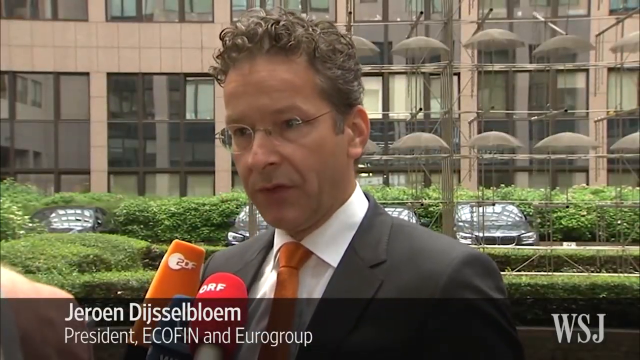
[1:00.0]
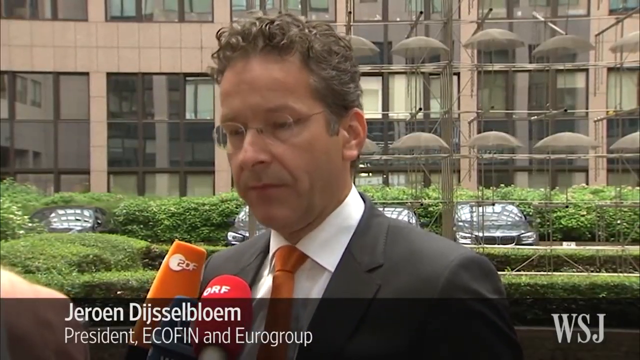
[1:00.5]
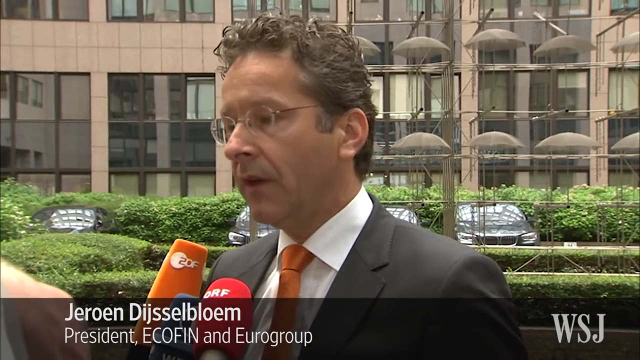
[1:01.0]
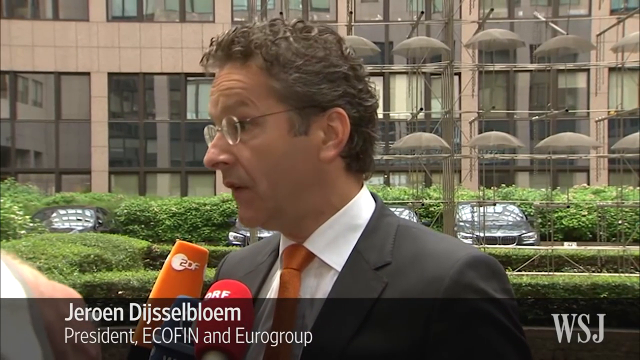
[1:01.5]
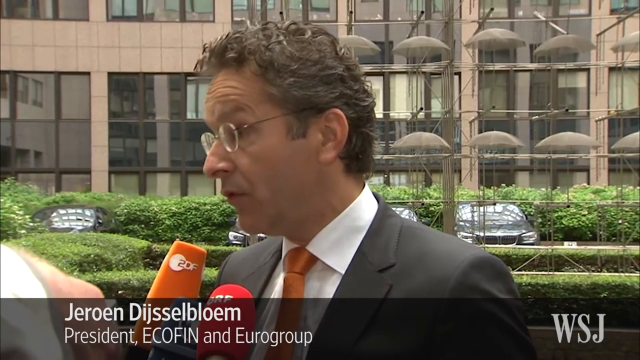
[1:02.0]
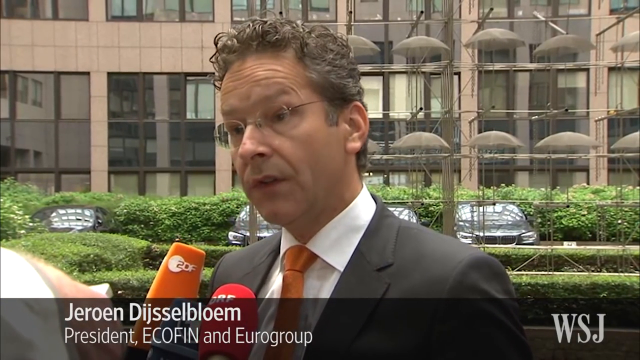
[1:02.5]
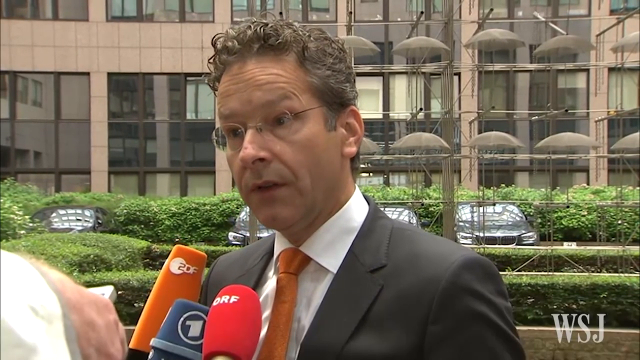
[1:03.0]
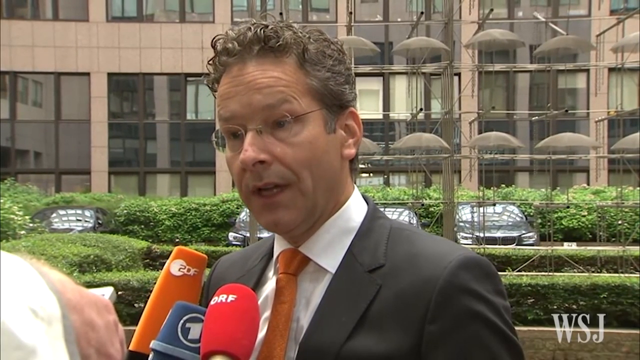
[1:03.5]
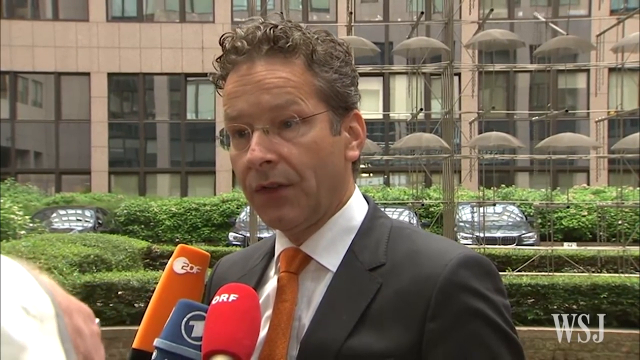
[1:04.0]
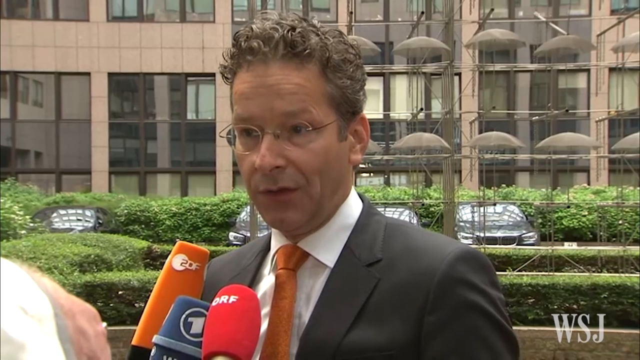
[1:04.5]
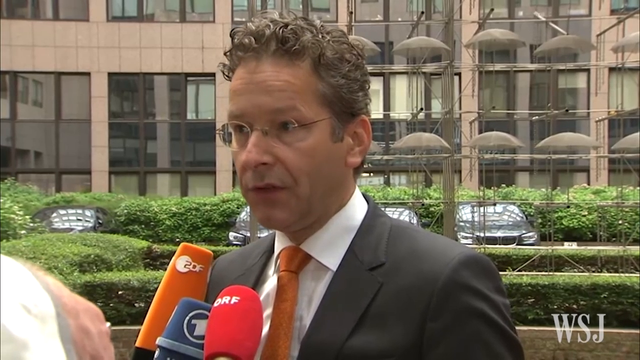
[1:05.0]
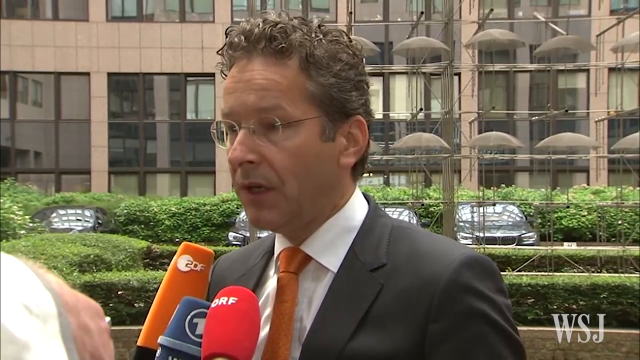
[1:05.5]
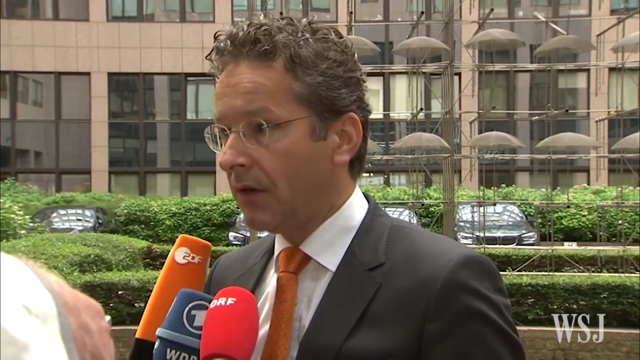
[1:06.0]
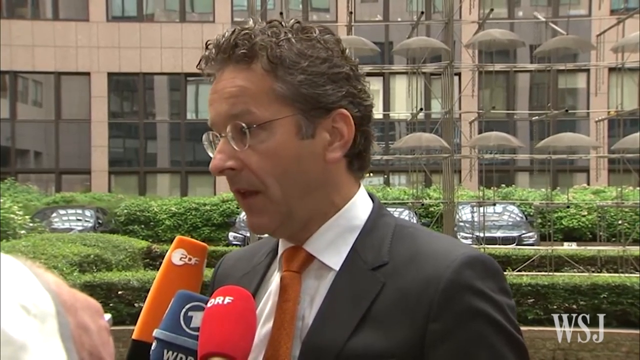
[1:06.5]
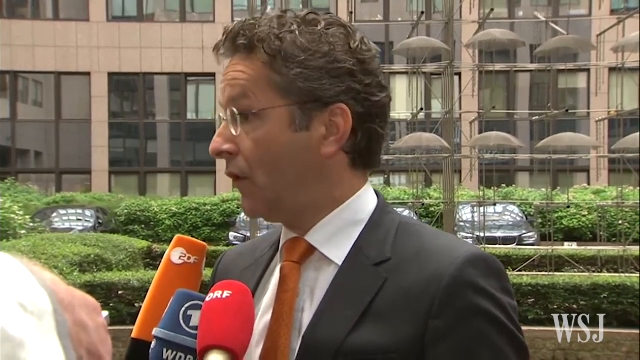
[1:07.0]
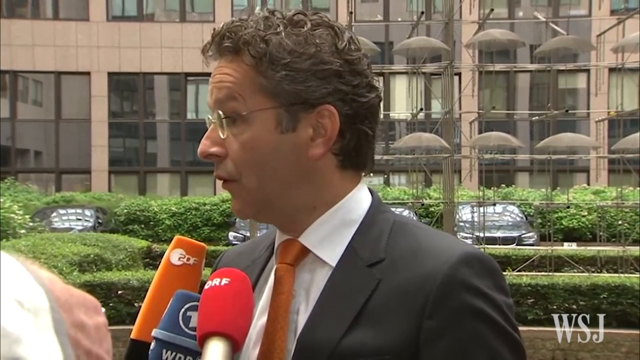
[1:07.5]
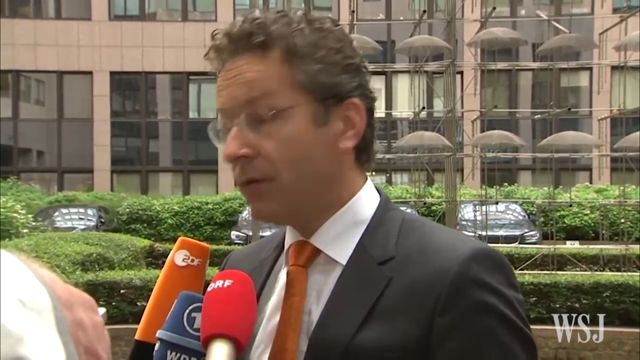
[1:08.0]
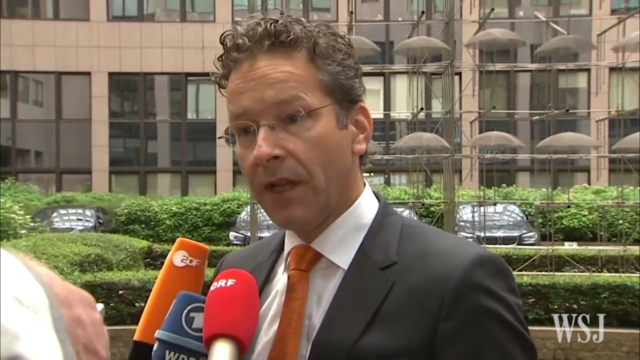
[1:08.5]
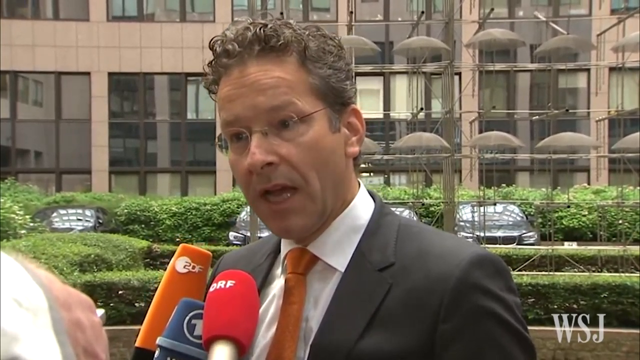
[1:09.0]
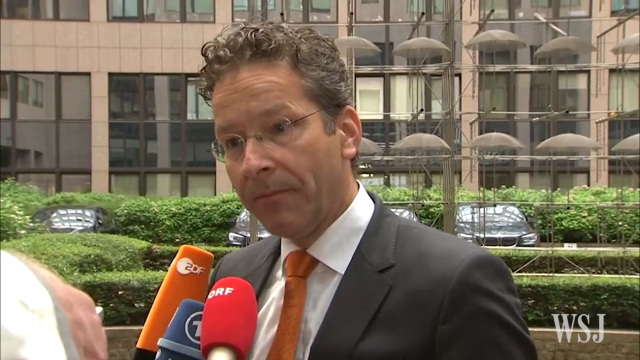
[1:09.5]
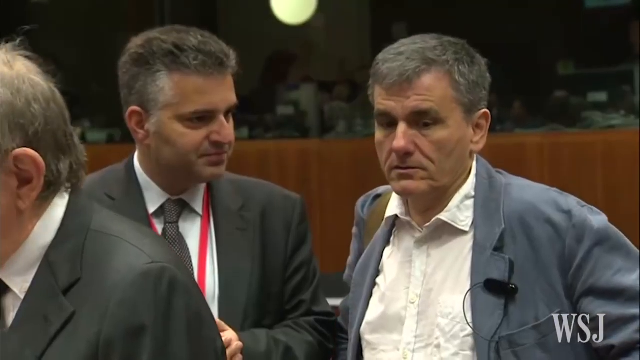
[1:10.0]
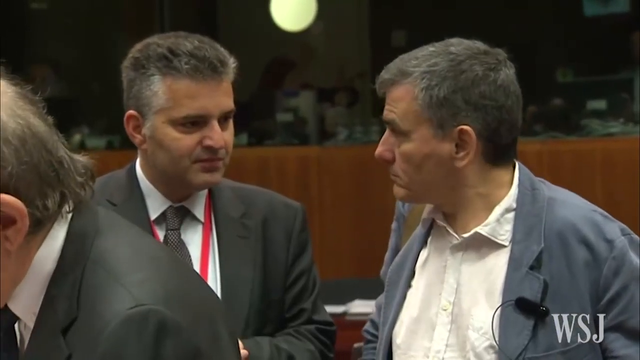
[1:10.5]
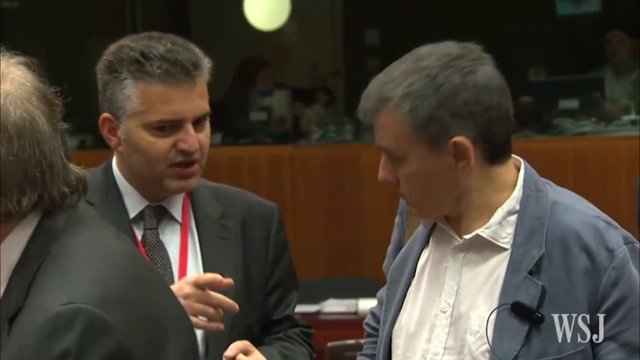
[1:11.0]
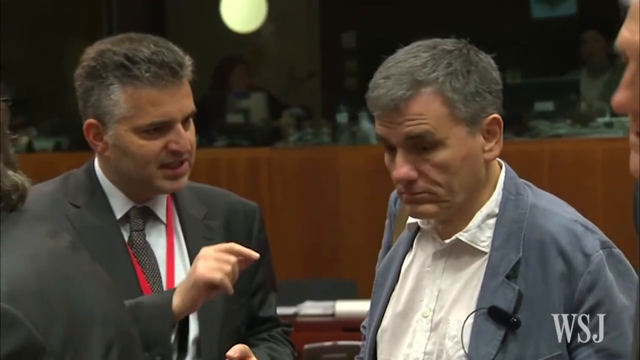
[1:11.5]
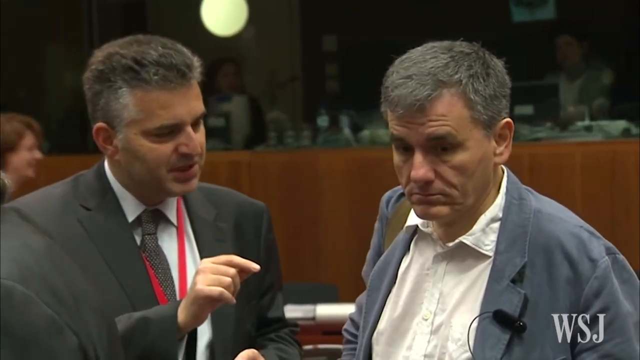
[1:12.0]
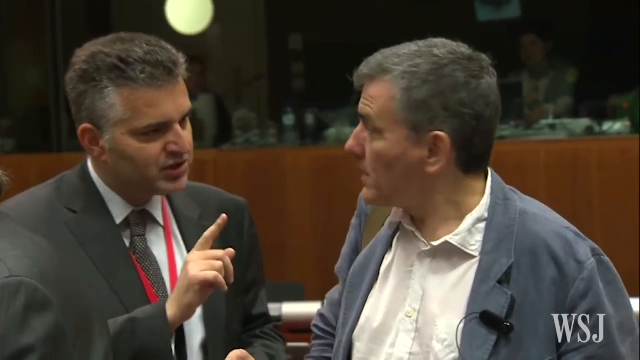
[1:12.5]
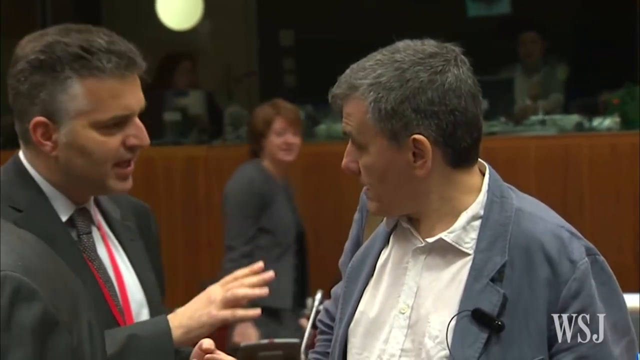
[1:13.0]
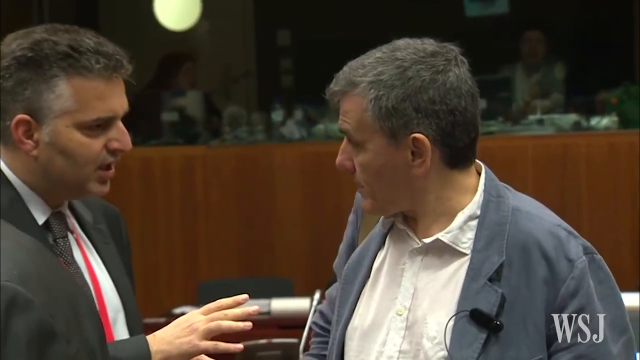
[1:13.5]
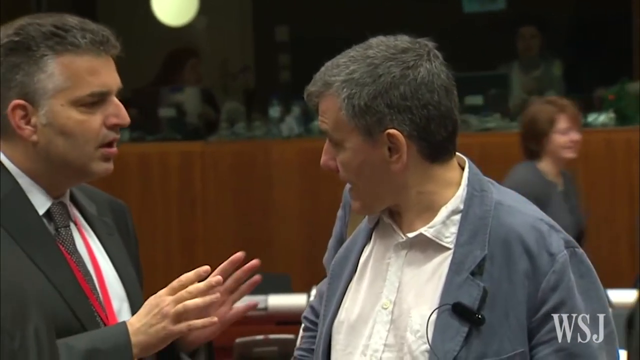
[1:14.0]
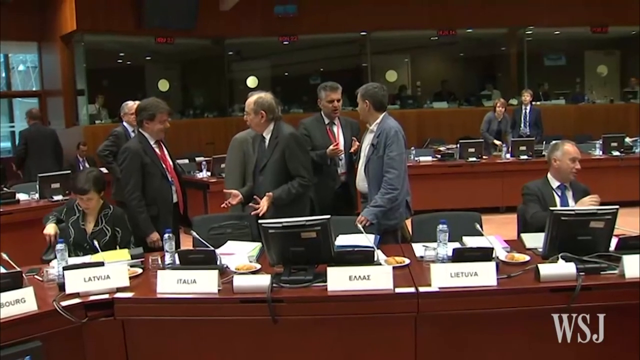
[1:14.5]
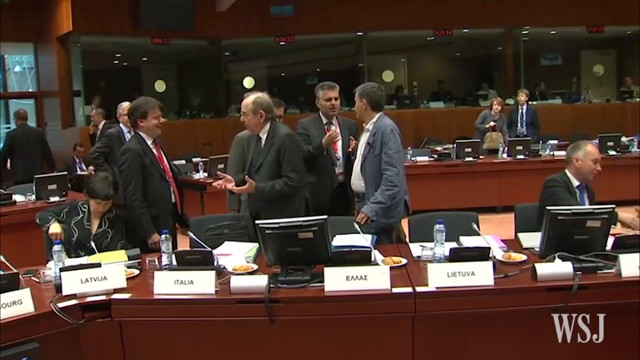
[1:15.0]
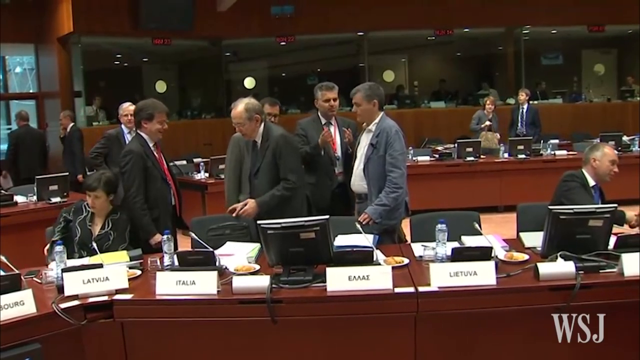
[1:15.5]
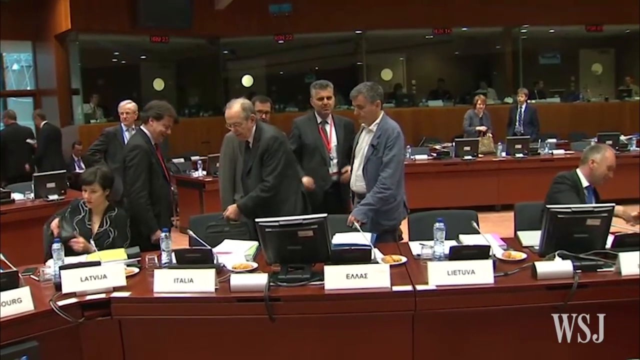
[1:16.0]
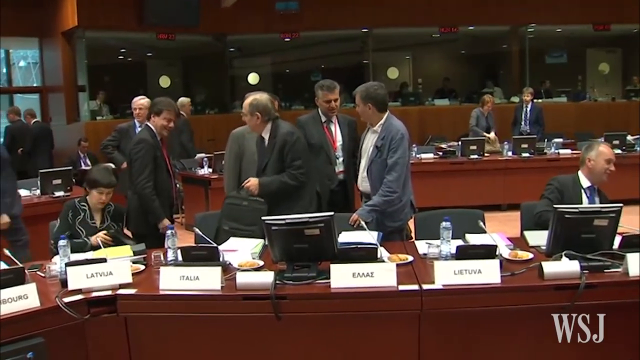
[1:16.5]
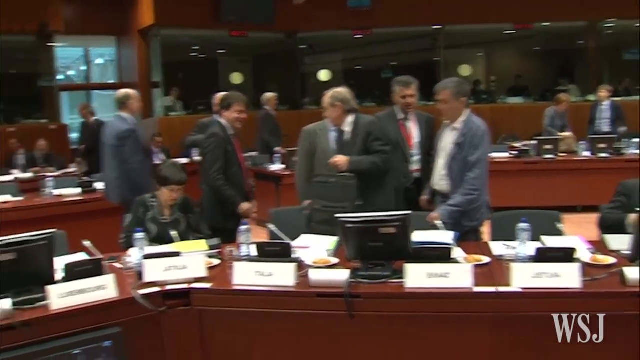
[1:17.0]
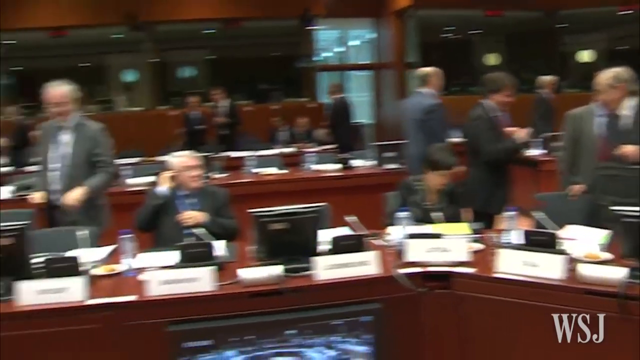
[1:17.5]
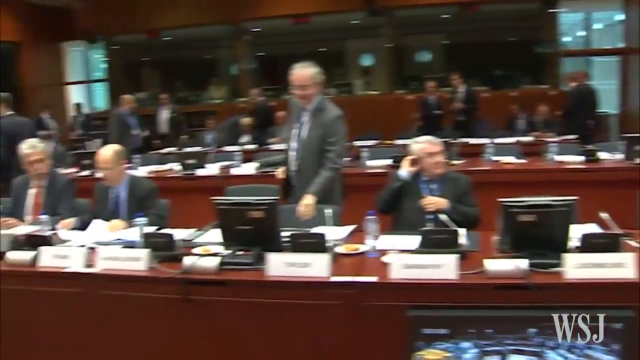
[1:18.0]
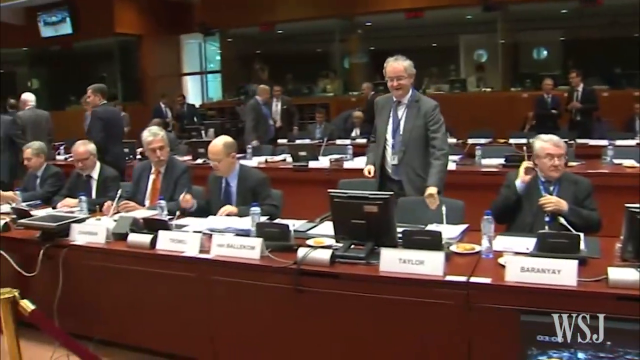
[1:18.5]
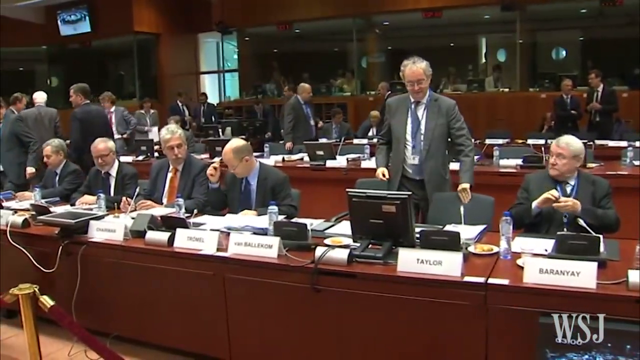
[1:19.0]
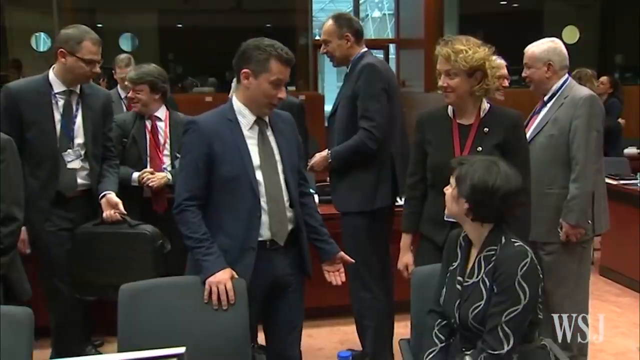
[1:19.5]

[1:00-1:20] A man is positioned in the center of the frame with orange, red and blue microphones in front of him. He wears a dark gray jacket, an orange tie, a white shirt and glasses with a very thin frame, and has gray hair. He speaks while turning his head toward the camera. In the background are bushes, parked cars and a rather tall, light-colored building with very large windows. Next, a rather close-up shot shows two men in a room wearing rather elegant clothes, jackets and shirts. Another shot shows people inside a very large room with brown desks bearing white tags with black inscriptions. At one point the camera turns to the left, showing other people sitting in dark chairs, wearing dark jackets, shirts and ties.